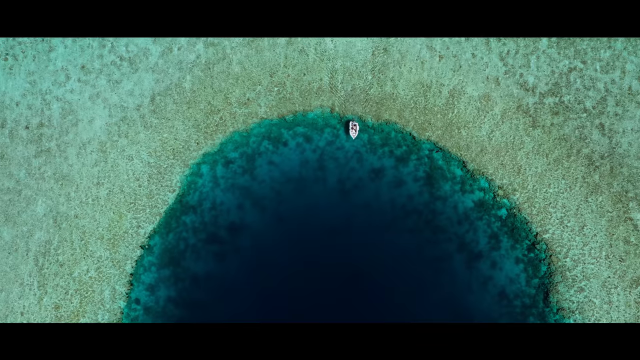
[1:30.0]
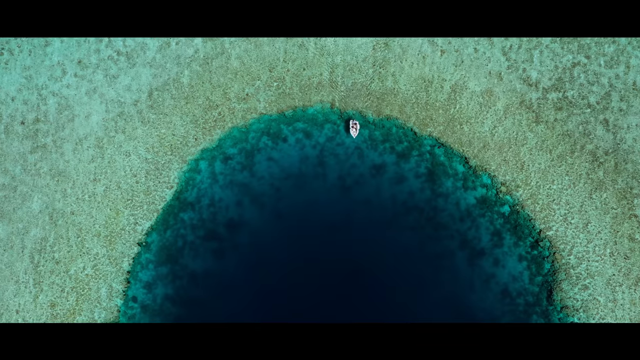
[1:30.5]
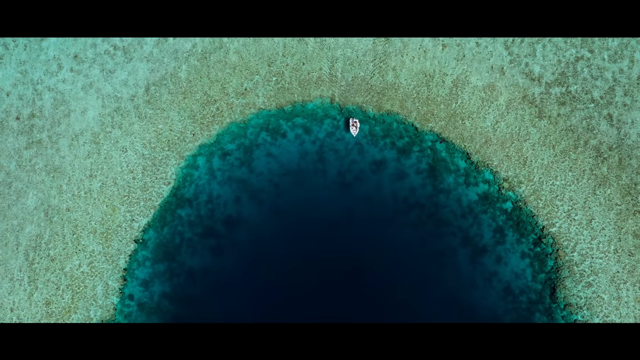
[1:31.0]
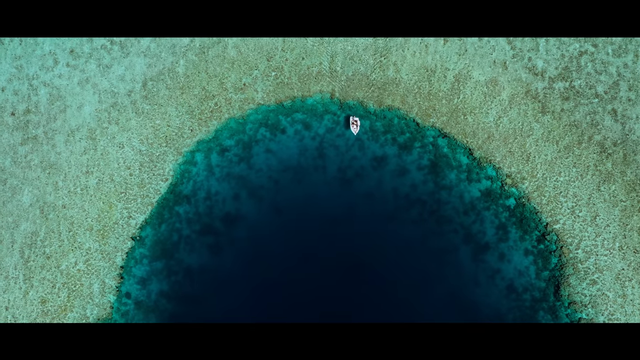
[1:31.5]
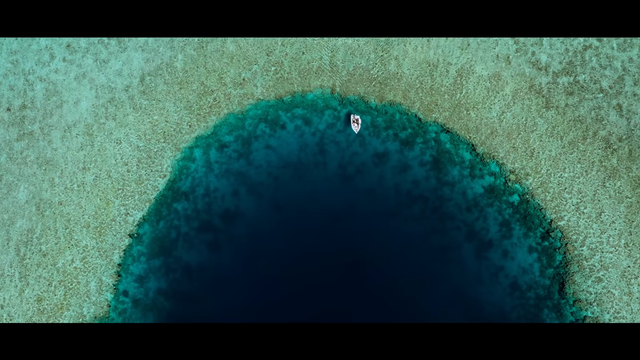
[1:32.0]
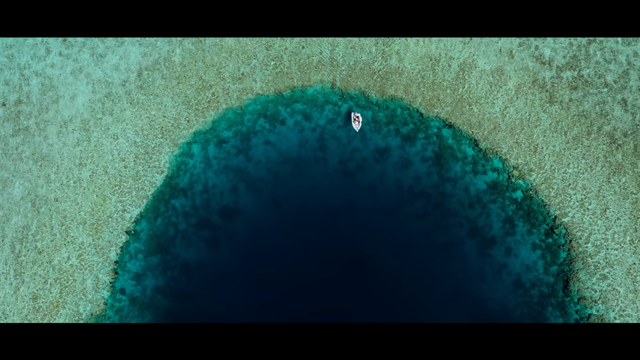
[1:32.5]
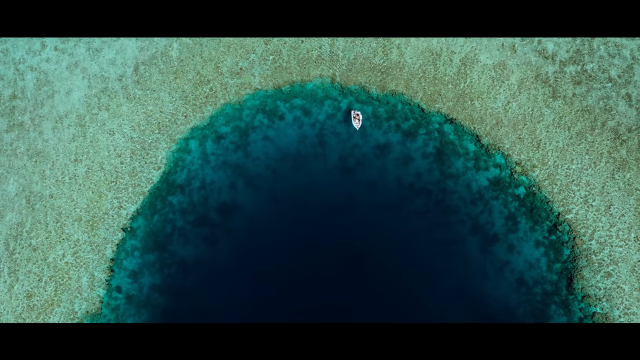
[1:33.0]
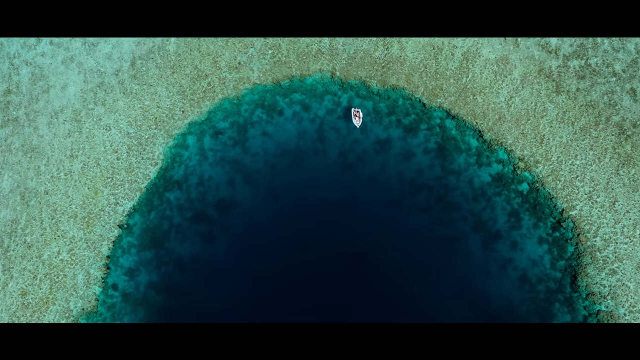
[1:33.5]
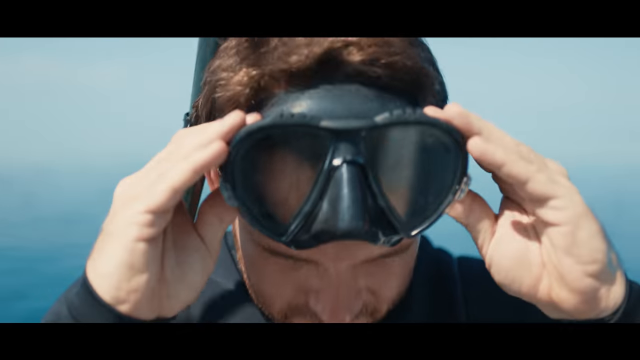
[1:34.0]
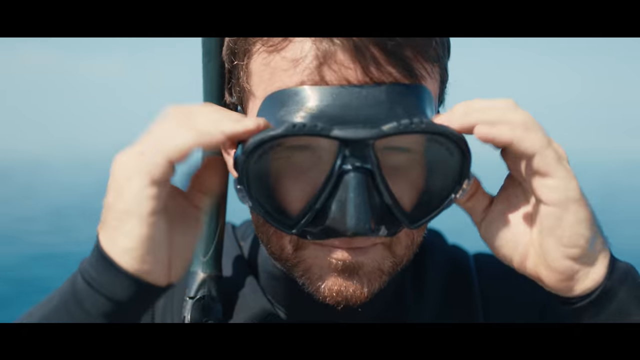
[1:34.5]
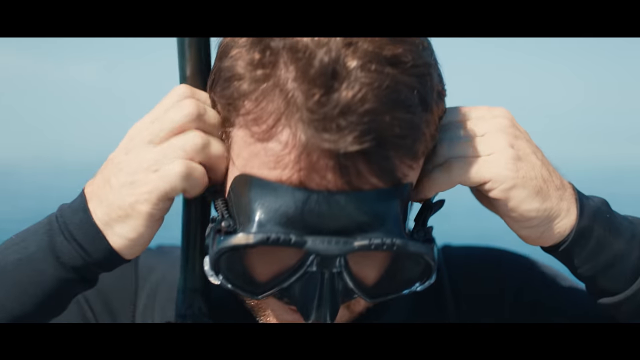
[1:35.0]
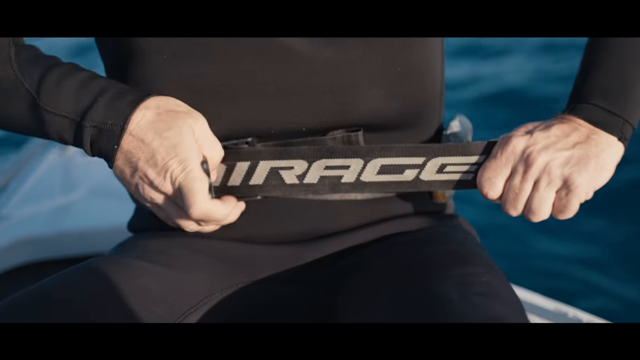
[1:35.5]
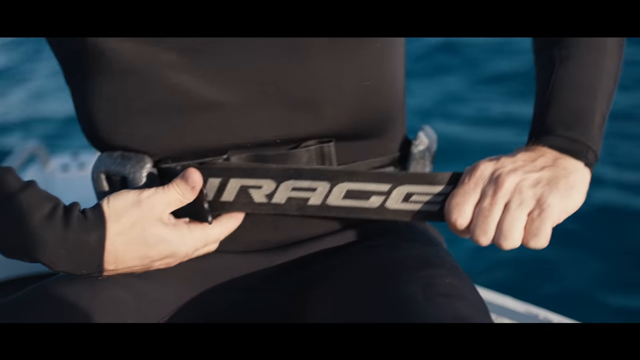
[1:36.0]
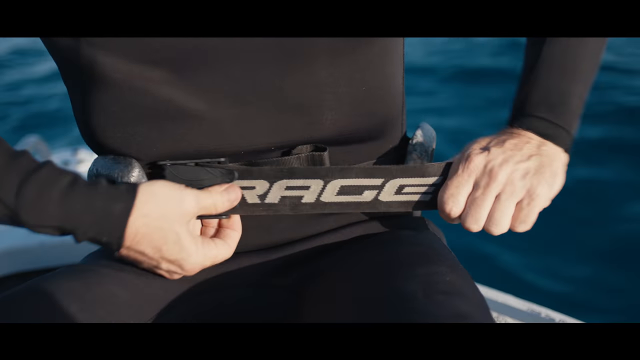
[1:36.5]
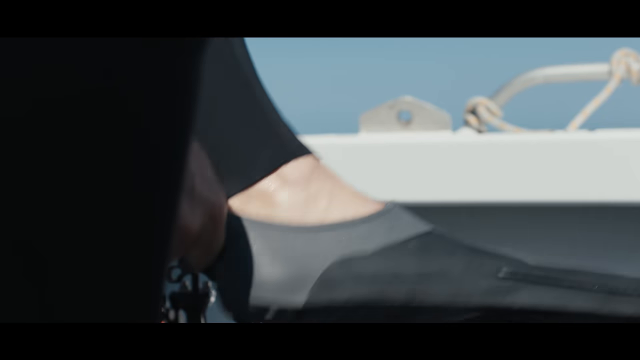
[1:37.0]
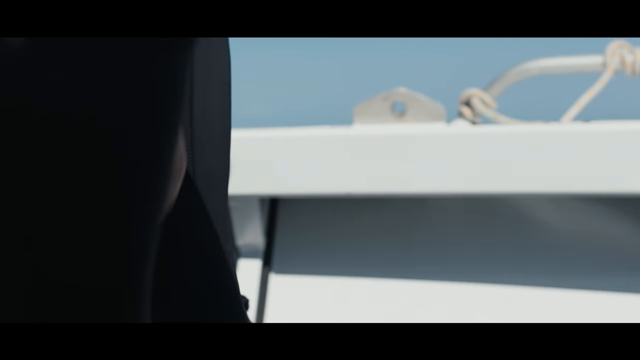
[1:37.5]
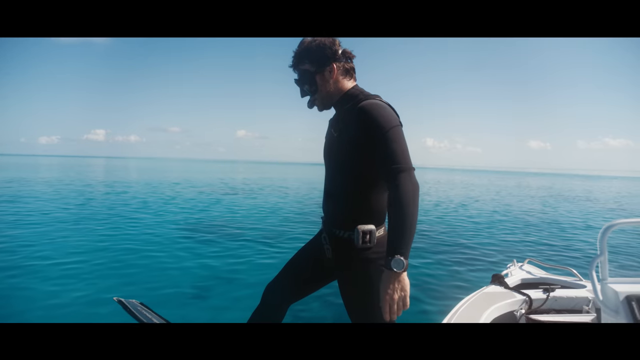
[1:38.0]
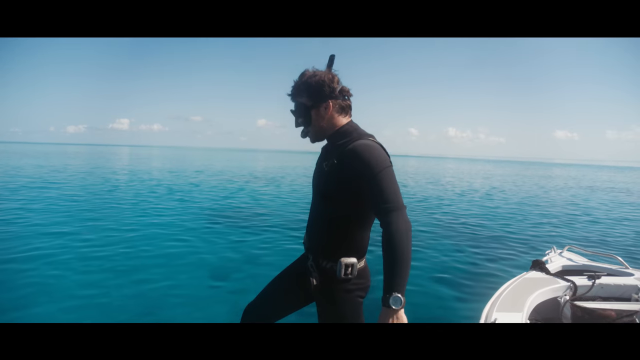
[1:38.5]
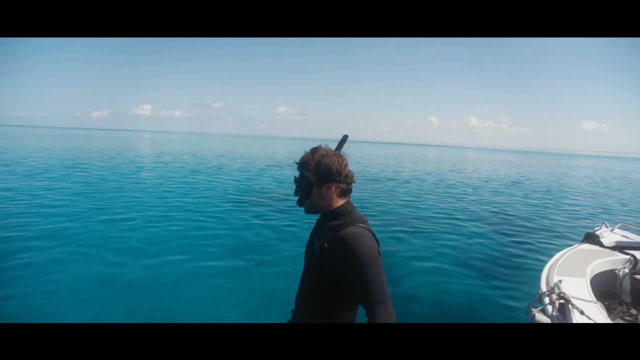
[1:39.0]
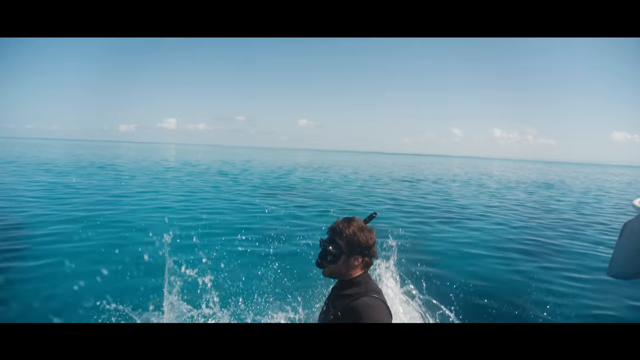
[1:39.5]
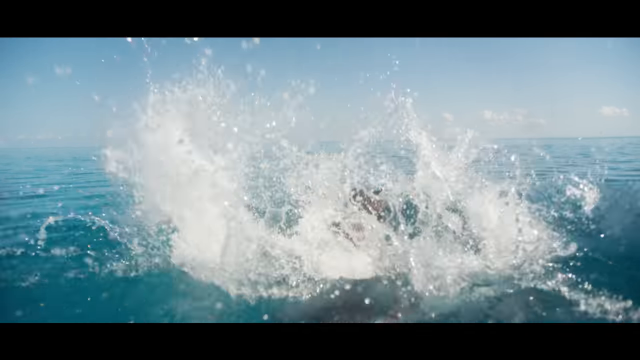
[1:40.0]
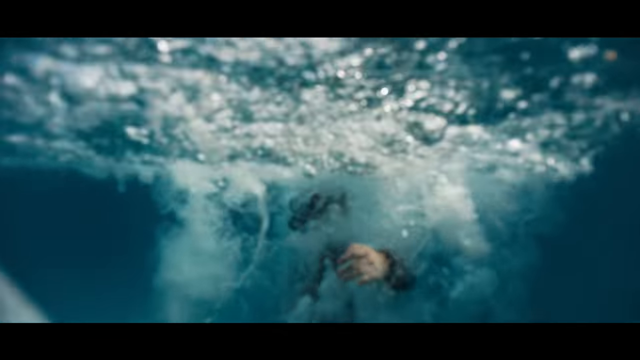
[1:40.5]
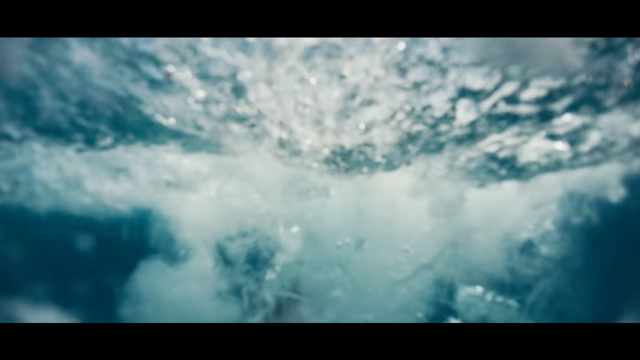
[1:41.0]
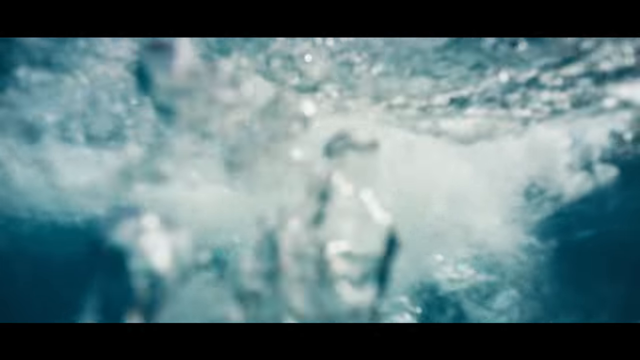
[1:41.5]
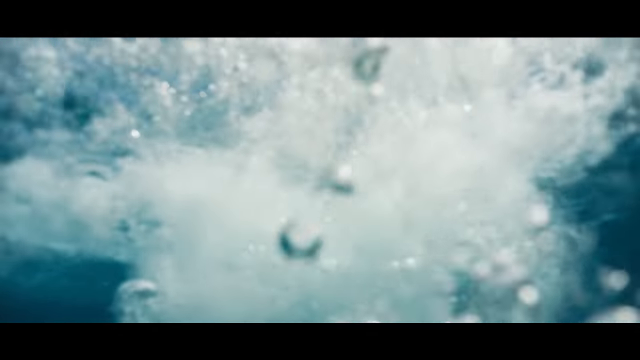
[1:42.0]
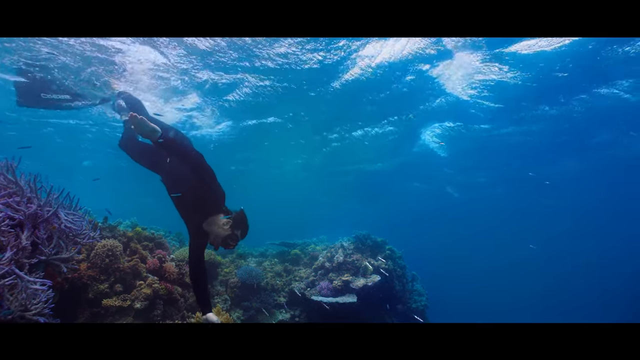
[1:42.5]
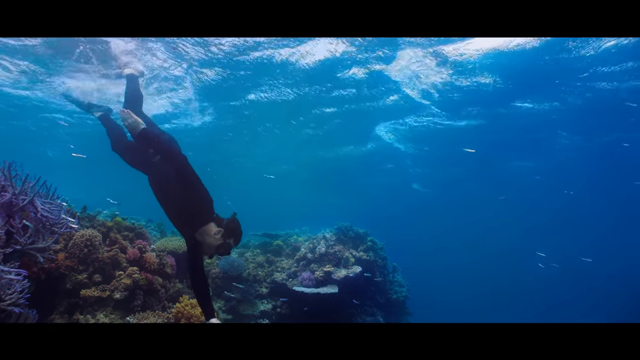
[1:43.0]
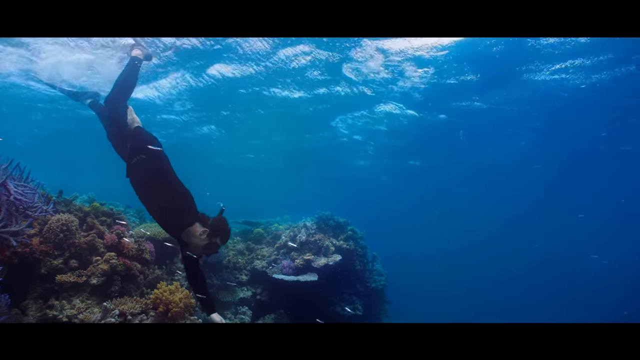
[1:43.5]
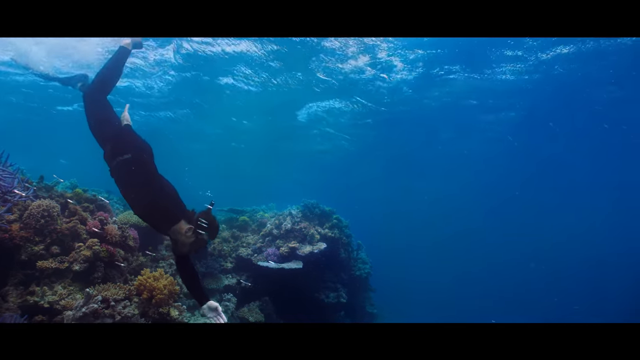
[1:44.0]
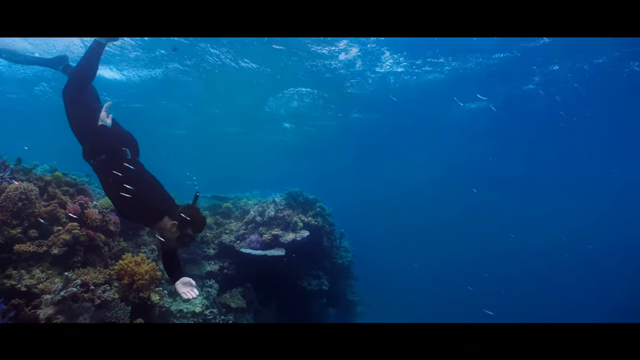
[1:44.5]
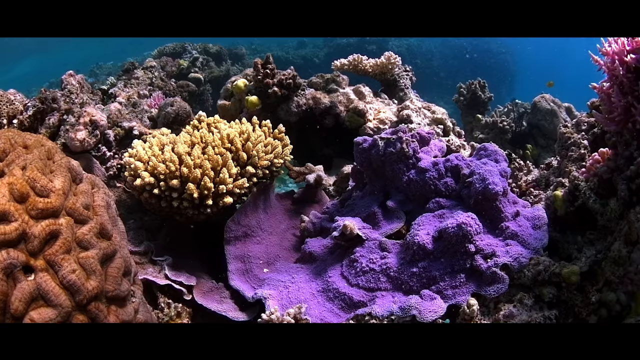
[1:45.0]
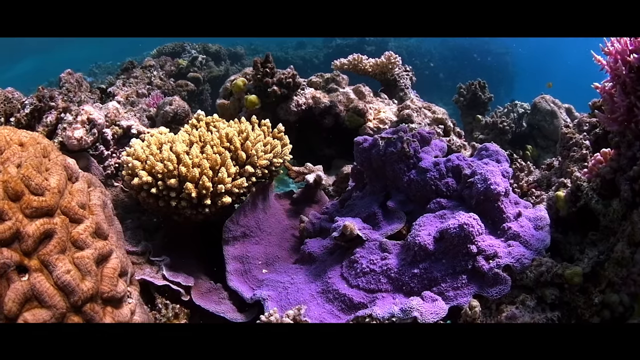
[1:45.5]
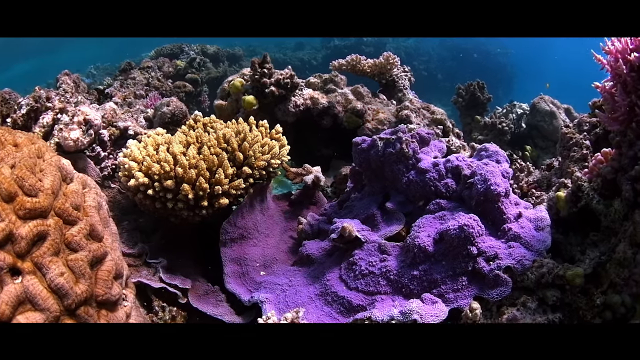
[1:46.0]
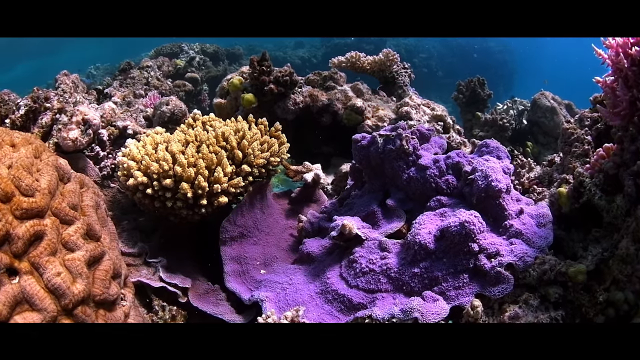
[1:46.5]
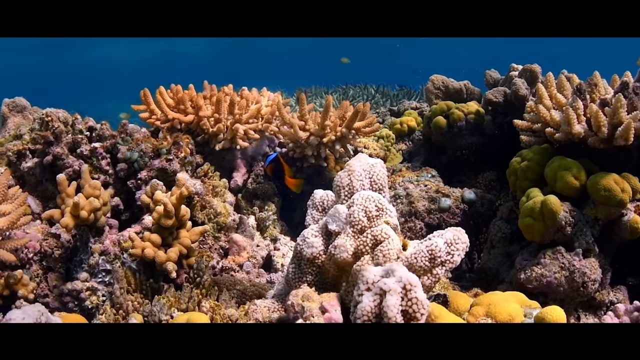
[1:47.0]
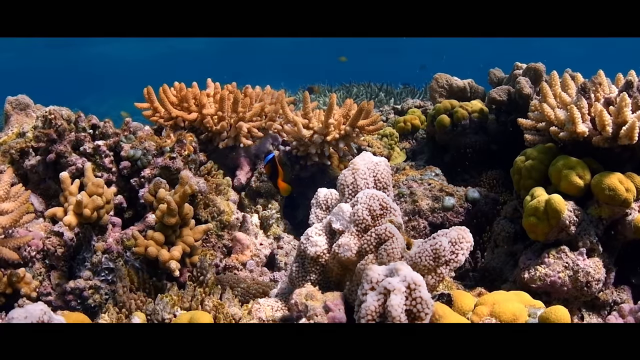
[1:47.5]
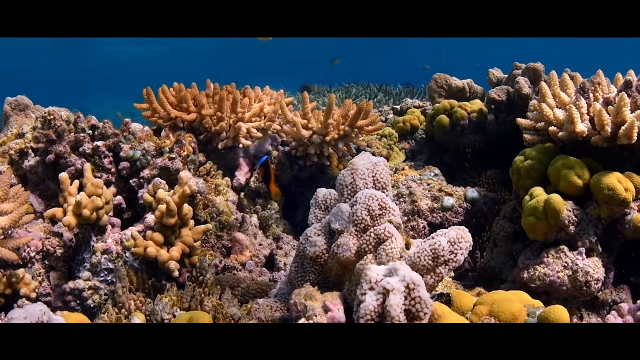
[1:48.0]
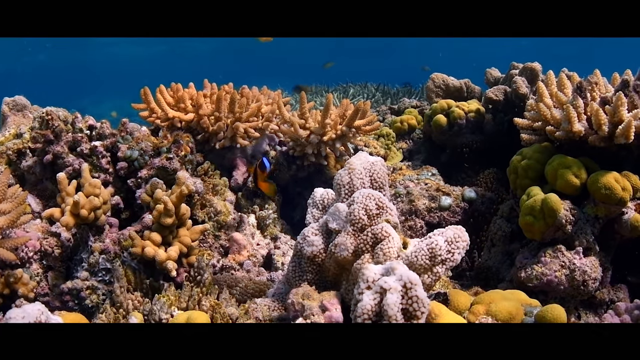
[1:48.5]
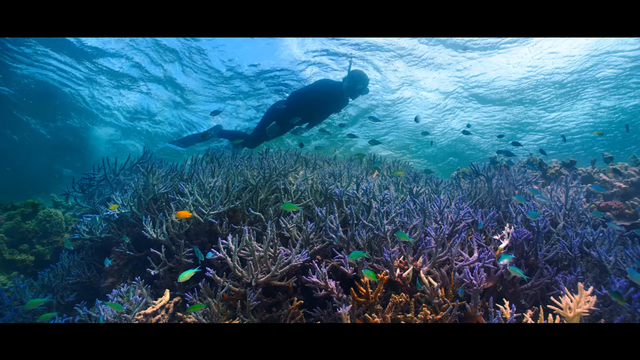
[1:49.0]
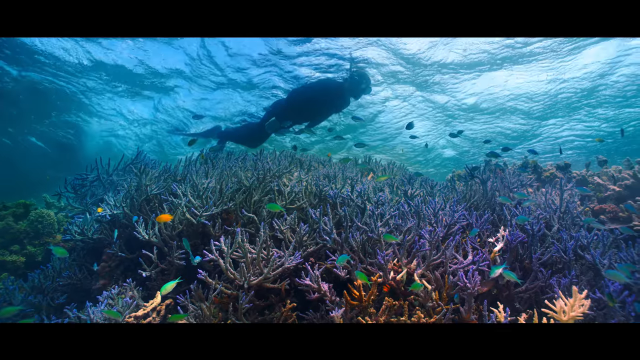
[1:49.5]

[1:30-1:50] The view shows the top edge of a blue hole in the ocean, with a tiny white boat floating over it. A diver gets ready in his scuba gear to go snorkeling. His diving suit is black, and he wears an eye mask, a short black snorkel and flippers on his feet; his hands are bare. He swims over the coral reef that surrounds the blue hole, which is lush and teeming with life. There are many types of brightly colored fish and corals in yellows, blues, purples, greens, oranges and everything in between. Some of the corals look like brains, some look like spikes, and some are lumpy. The fish look healthy and plentiful. The greater water area is a deep, rich blue, deep aqua and clear, and quite bright. There are clownfish that are orange with white and black stripes.